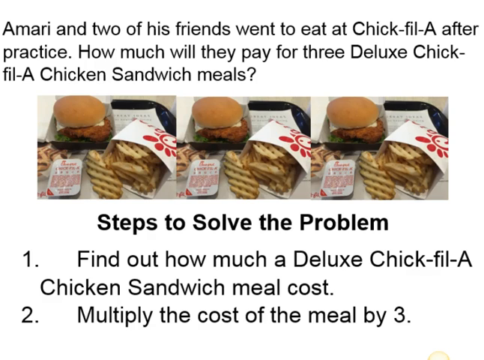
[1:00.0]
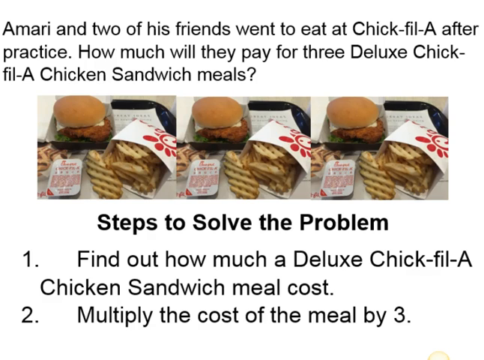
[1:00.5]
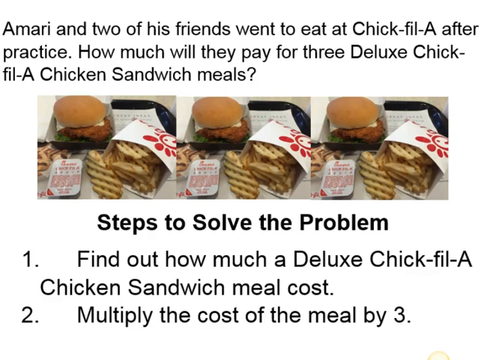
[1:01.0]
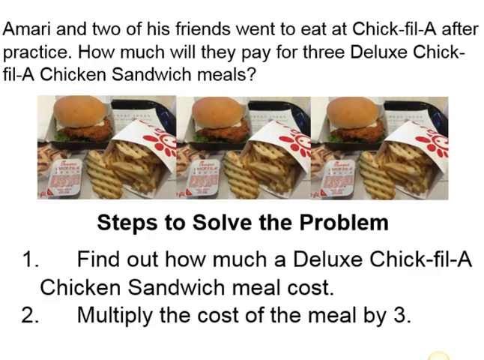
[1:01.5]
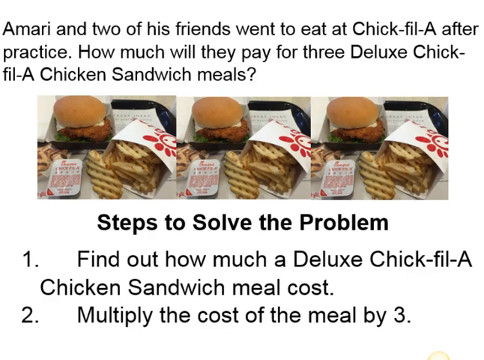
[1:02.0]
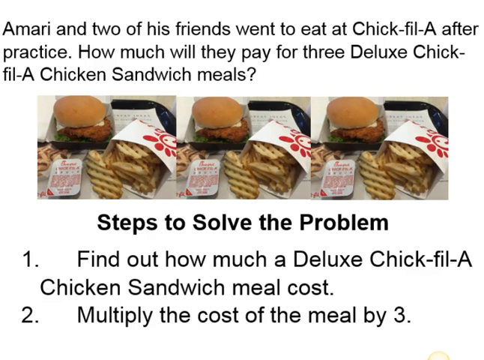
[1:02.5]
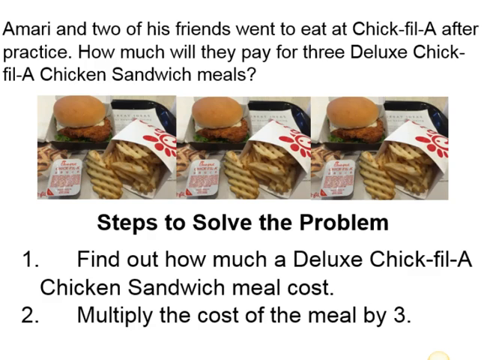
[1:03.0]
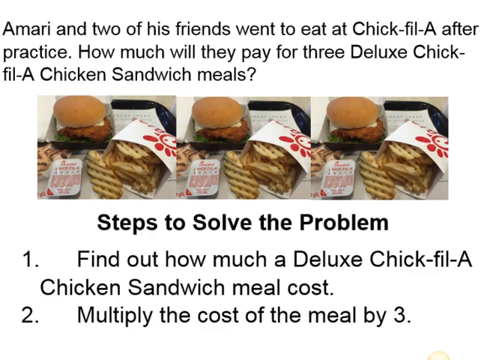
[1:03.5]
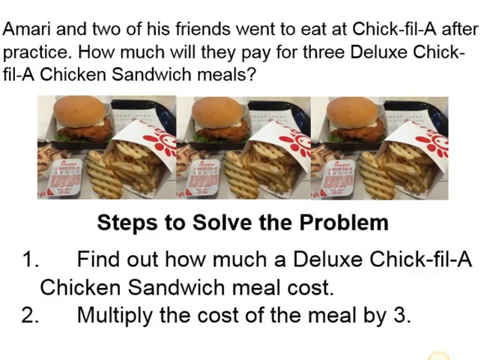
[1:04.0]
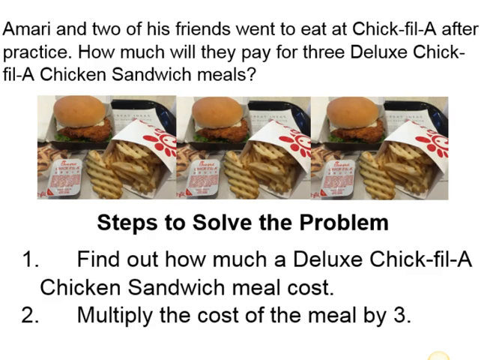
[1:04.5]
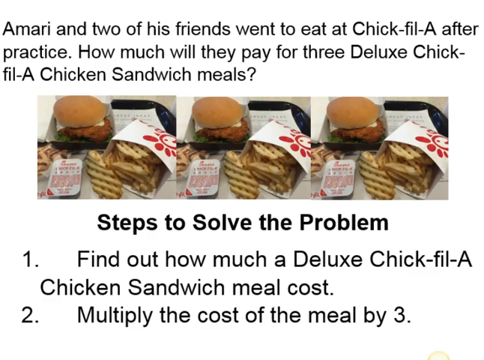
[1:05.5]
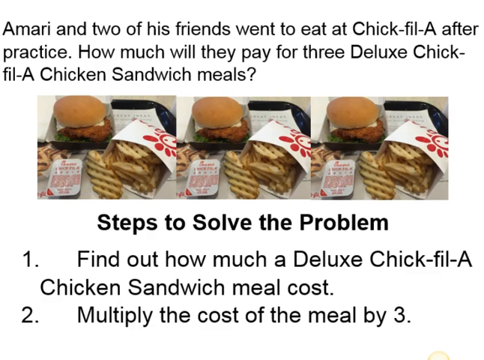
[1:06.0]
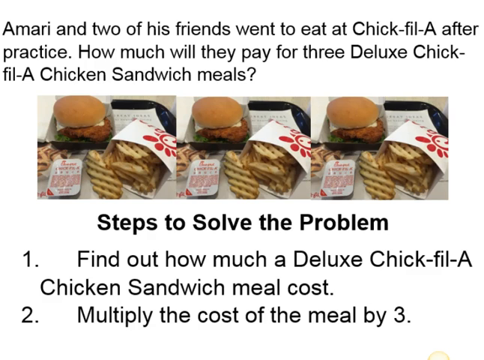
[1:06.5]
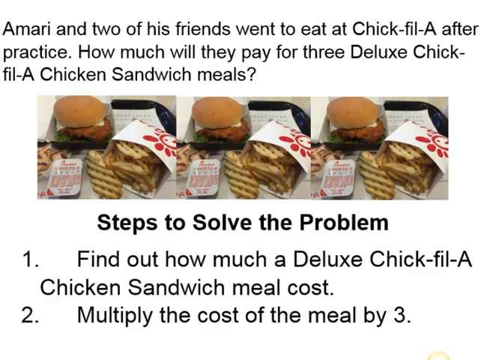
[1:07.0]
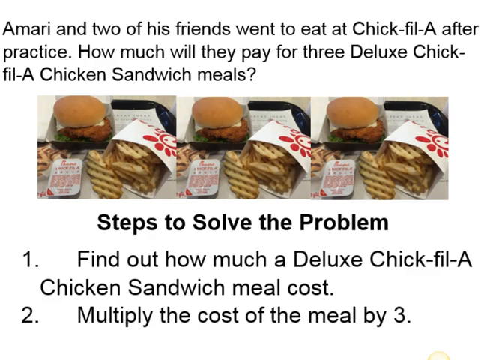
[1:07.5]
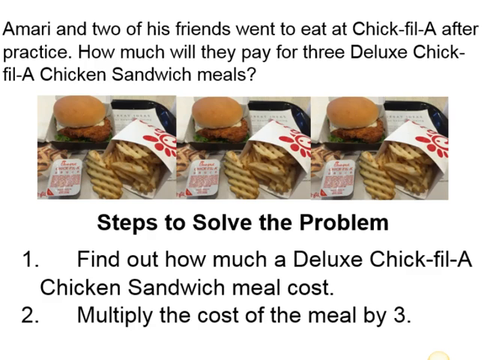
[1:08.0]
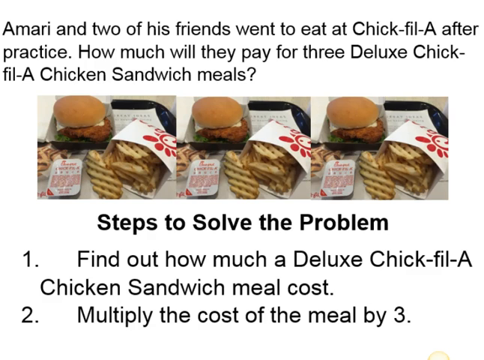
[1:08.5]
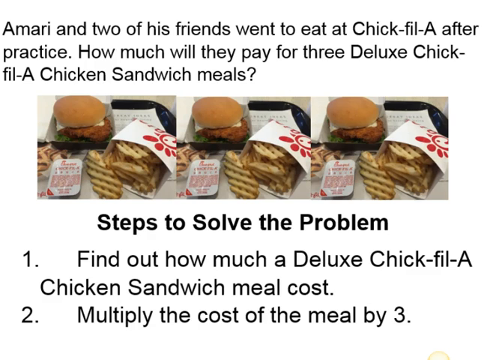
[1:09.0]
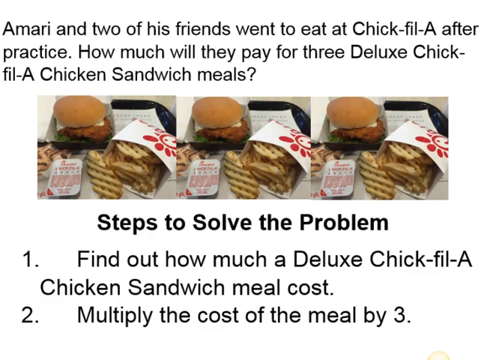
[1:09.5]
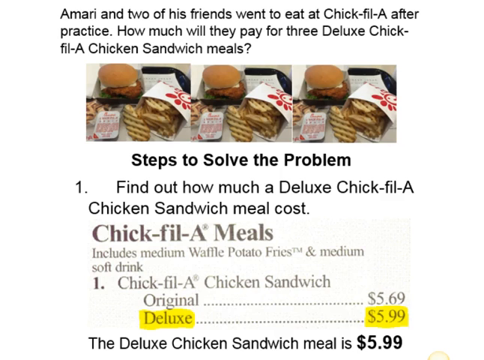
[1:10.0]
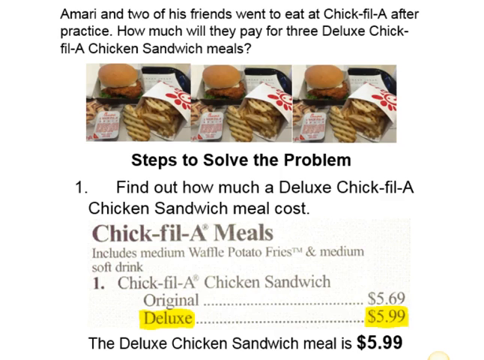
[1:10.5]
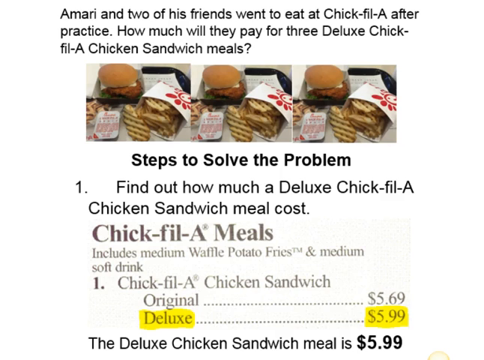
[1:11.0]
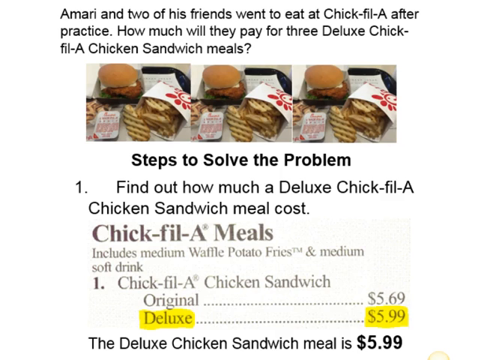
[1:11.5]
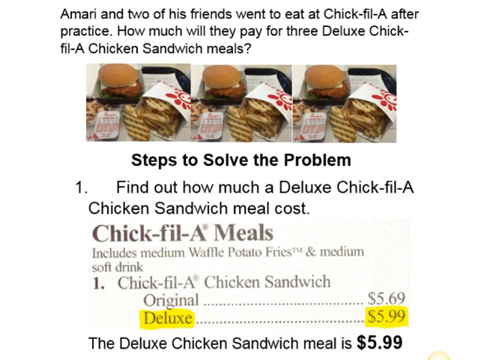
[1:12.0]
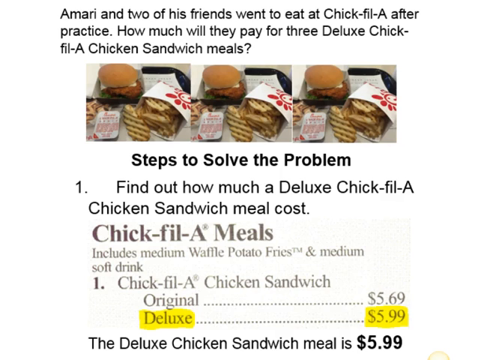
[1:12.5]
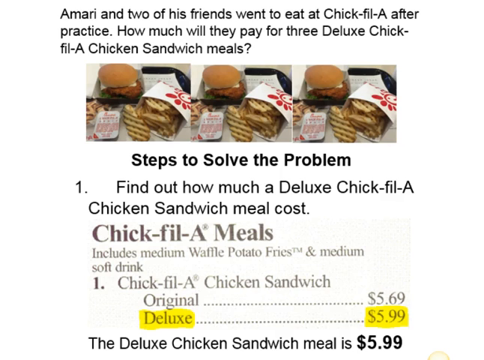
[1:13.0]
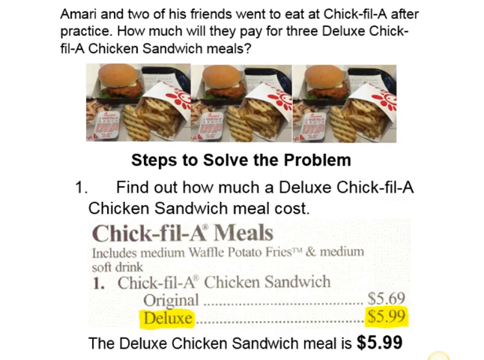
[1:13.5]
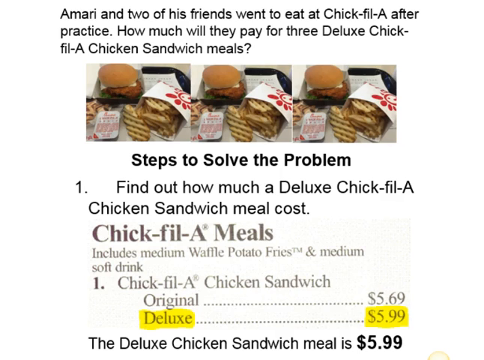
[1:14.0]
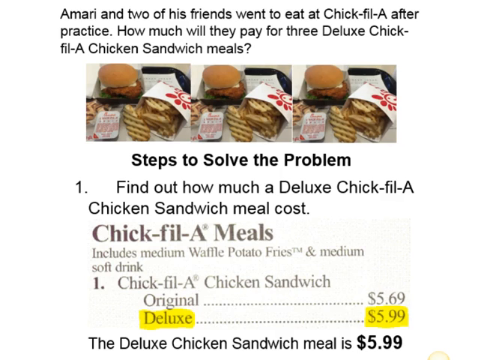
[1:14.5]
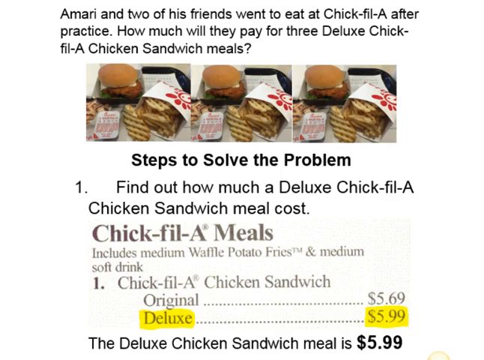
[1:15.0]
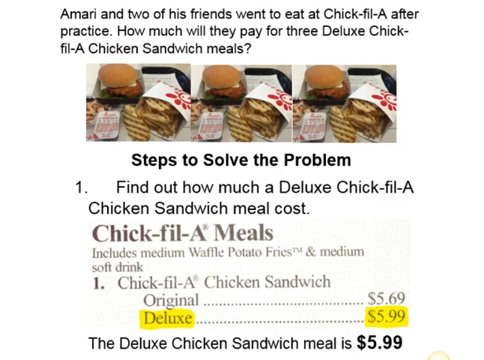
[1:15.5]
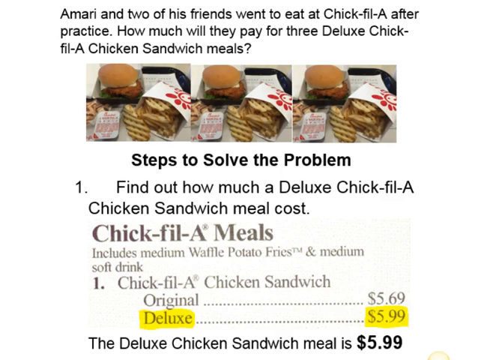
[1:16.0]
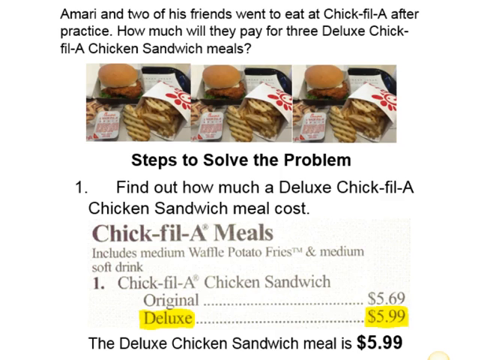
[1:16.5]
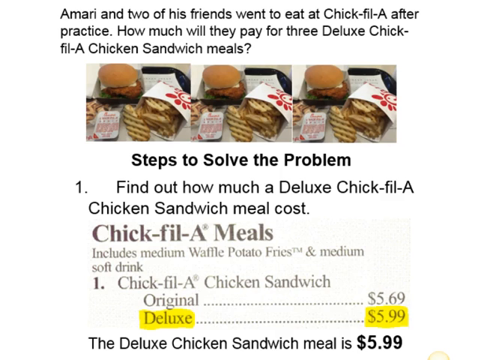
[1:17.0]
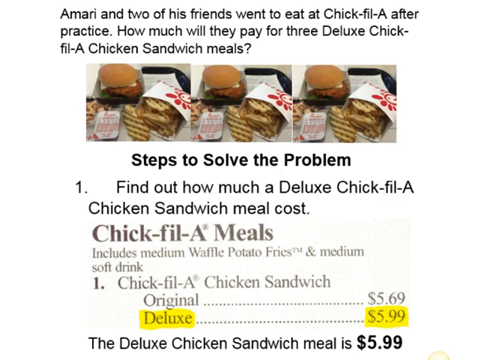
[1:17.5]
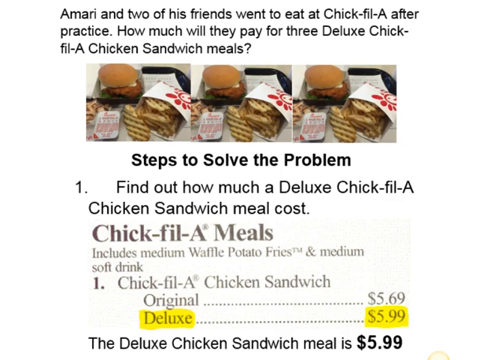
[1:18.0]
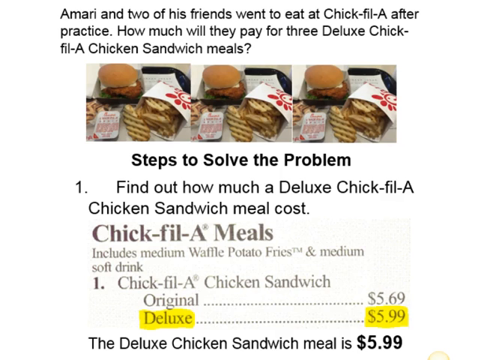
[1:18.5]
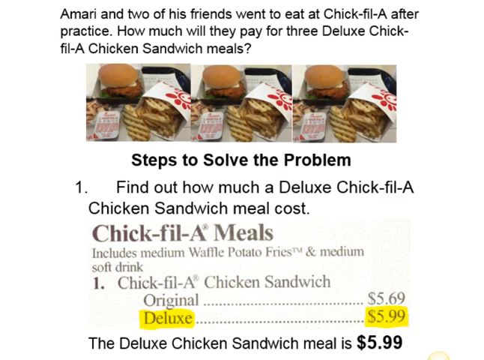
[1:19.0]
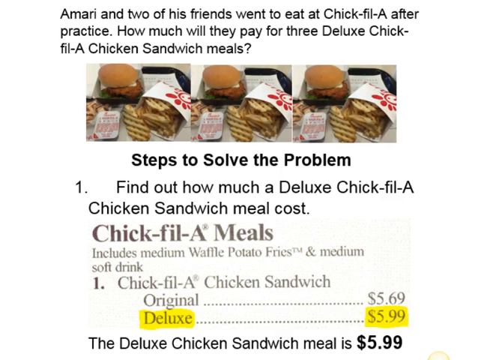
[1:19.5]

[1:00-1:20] The same three pictures of the sandwiches, French fries and sauce are shown. At the top it says "Amari and two of his friends went to eat at Chick-fil-A after practice. How much will they pay for three deluxe Chick-fil-A chicken sandwich meals?" Underneath the pictures it says "steps to solve the problem. Number one, find out how much a deluxe Chick-fil-A chicken sandwich meal costs. Number two, multiply the cost of the meal by three." The screen then changes to a new one with the same information at the top and the same three pictures. Now it says "steps to solve the problem. Number one, find out how much a deluxe Chick-fil-A chicken sandwich meal costs." Underneath that it says "Chick-fil-A meals includes medium waffle potato fries and medium soft drink," followed by "Number one, Chick-fil-A chicken sandwich," with Original at $5.69 and Deluxe at $5.99. The deluxe chicken sandwich meal is shown as $5.99.